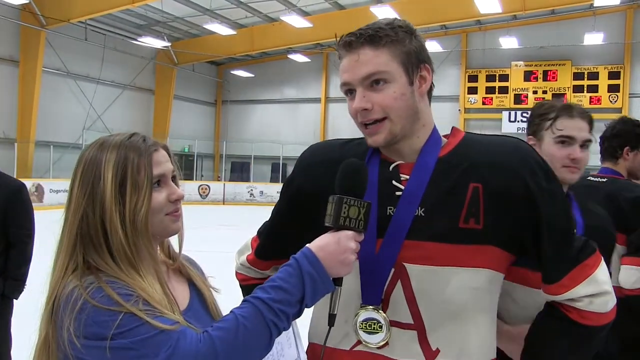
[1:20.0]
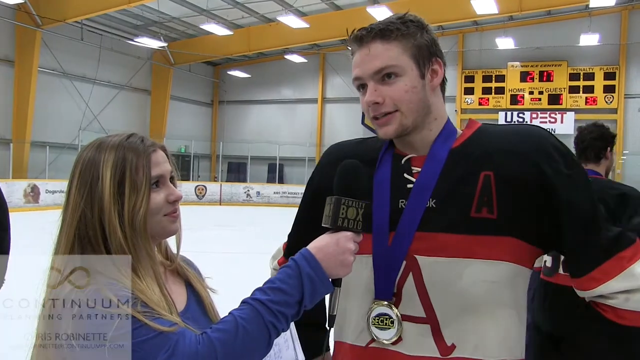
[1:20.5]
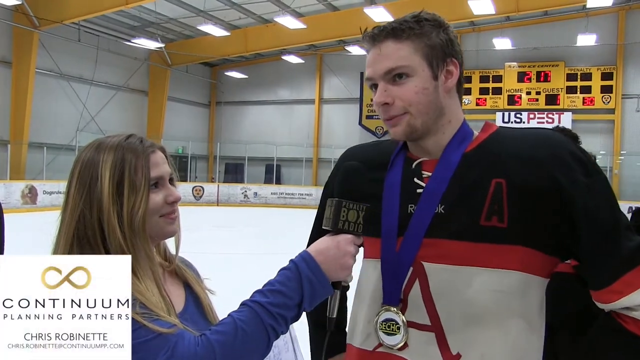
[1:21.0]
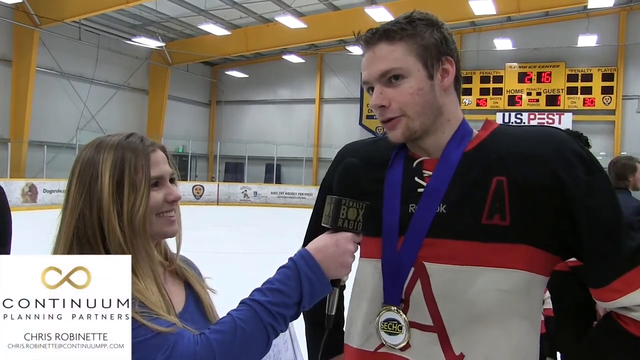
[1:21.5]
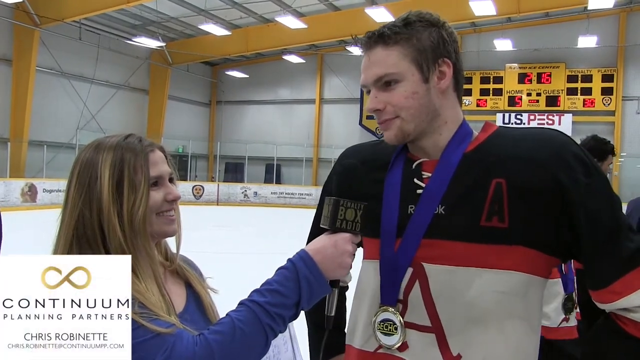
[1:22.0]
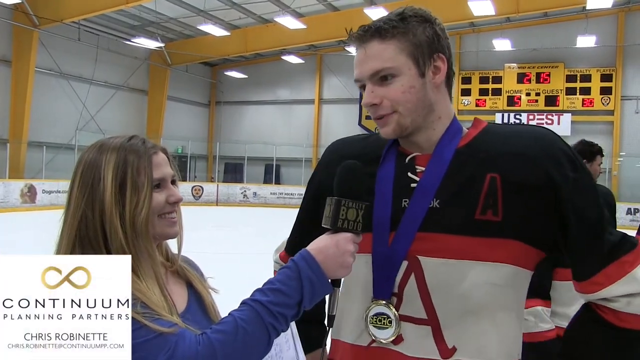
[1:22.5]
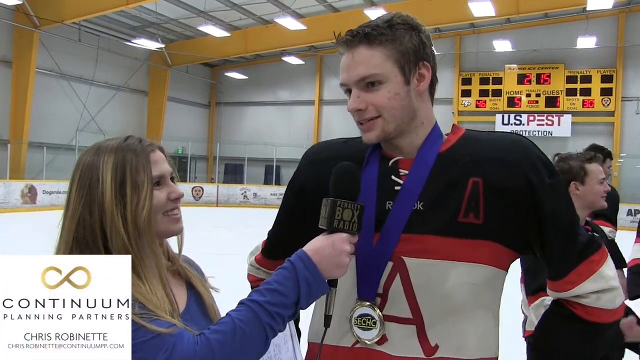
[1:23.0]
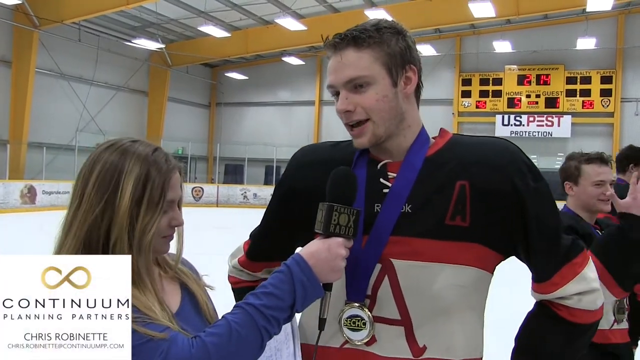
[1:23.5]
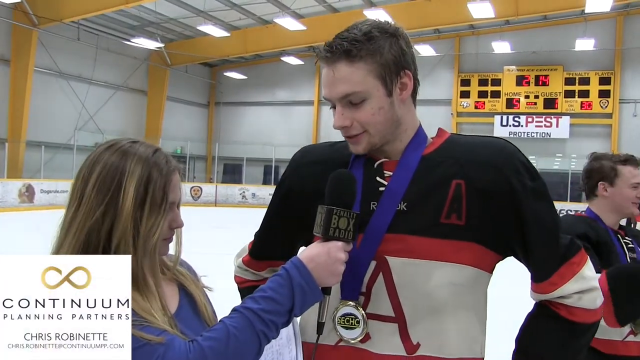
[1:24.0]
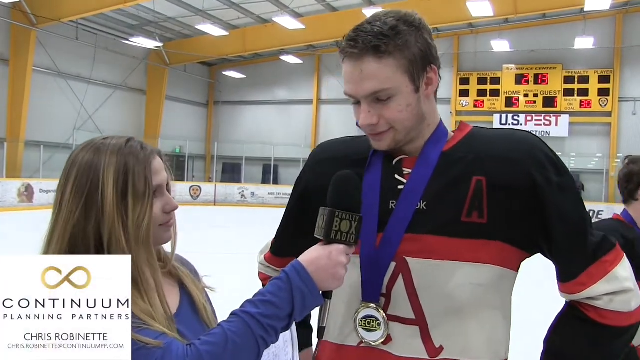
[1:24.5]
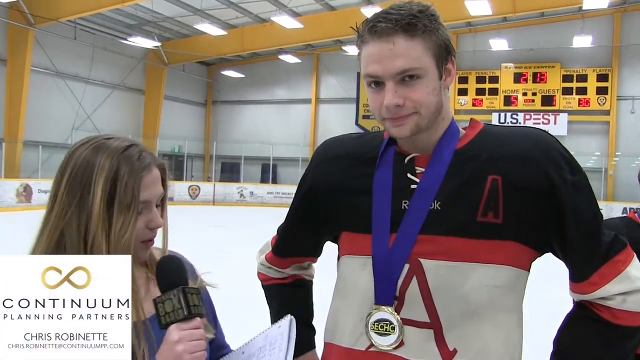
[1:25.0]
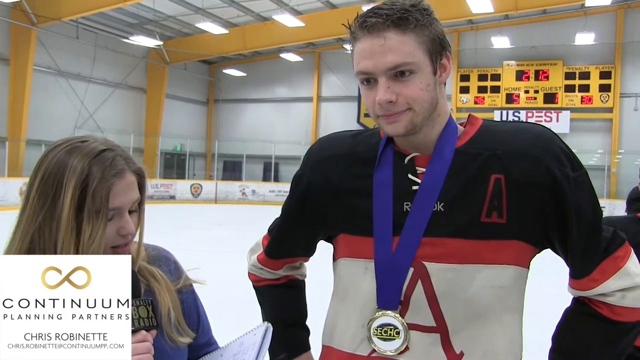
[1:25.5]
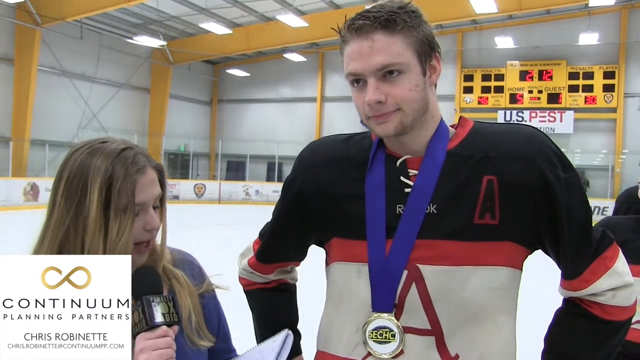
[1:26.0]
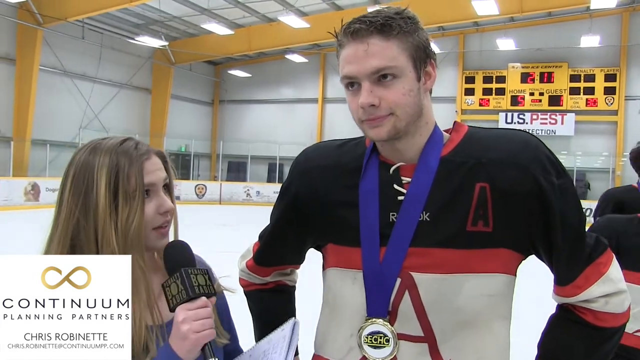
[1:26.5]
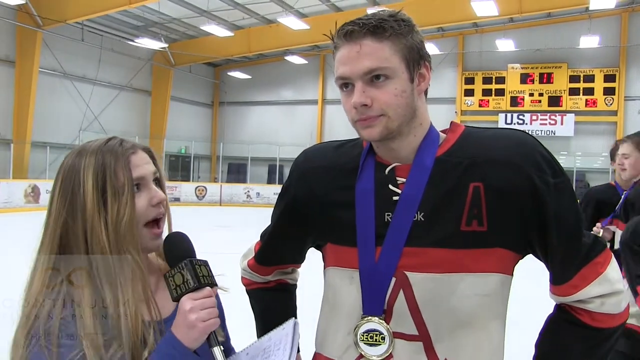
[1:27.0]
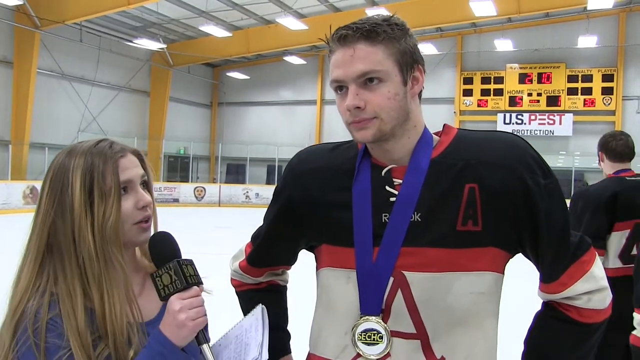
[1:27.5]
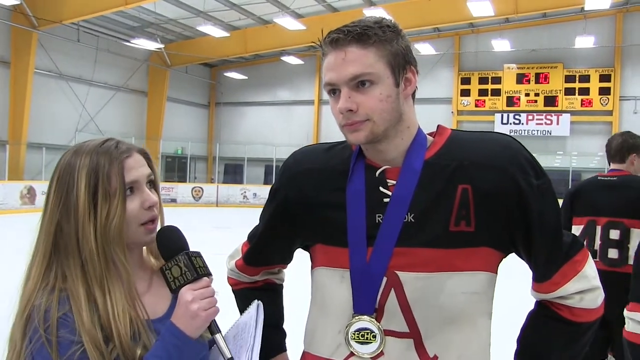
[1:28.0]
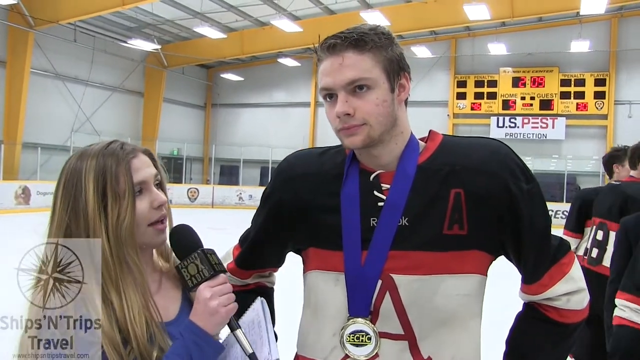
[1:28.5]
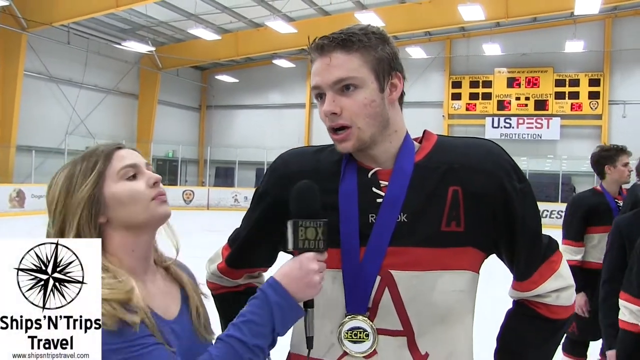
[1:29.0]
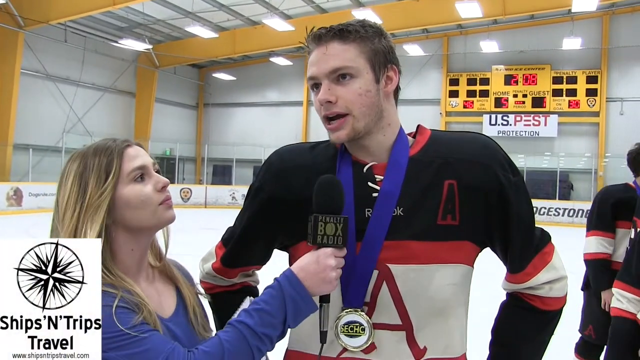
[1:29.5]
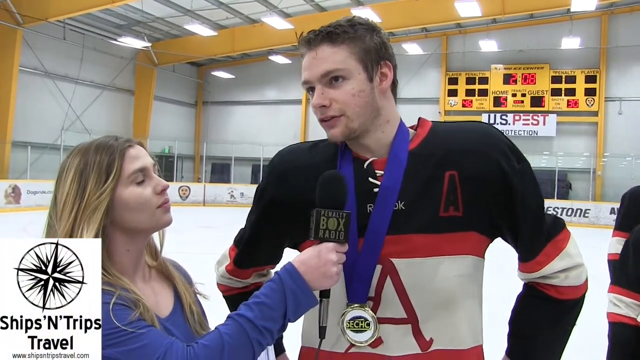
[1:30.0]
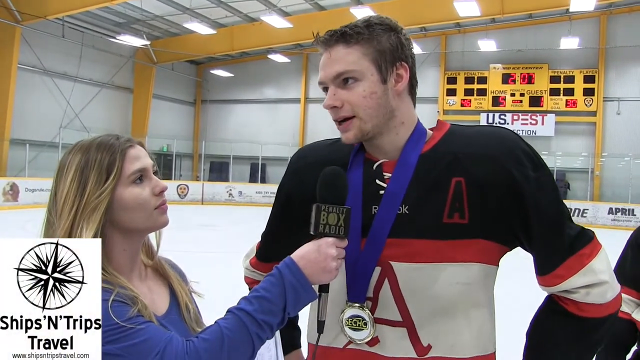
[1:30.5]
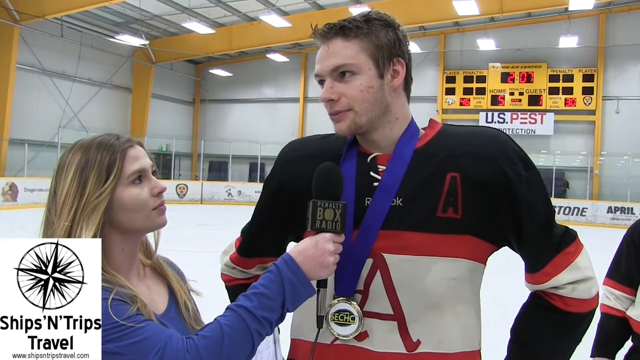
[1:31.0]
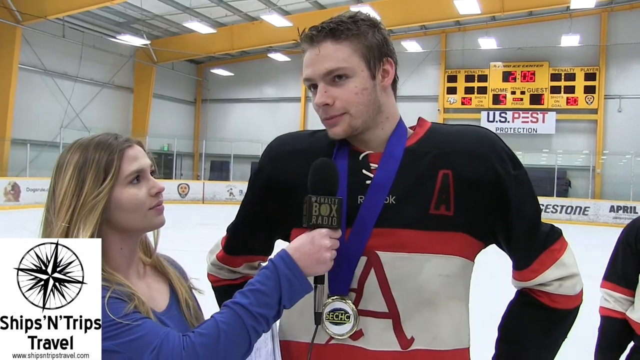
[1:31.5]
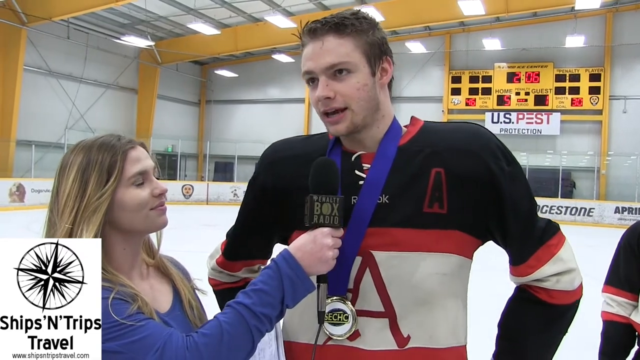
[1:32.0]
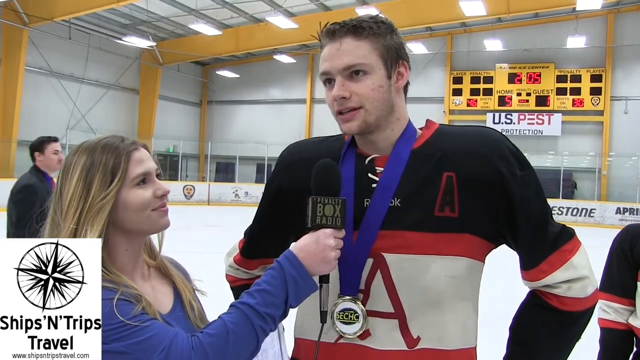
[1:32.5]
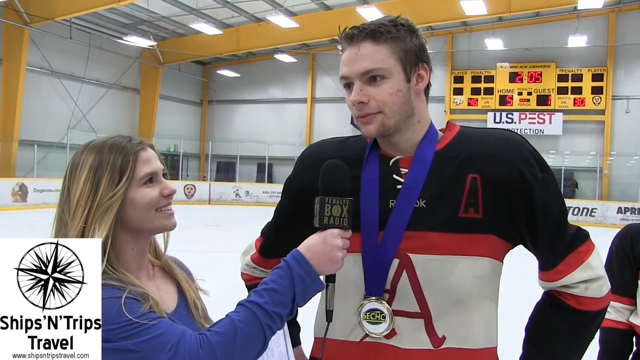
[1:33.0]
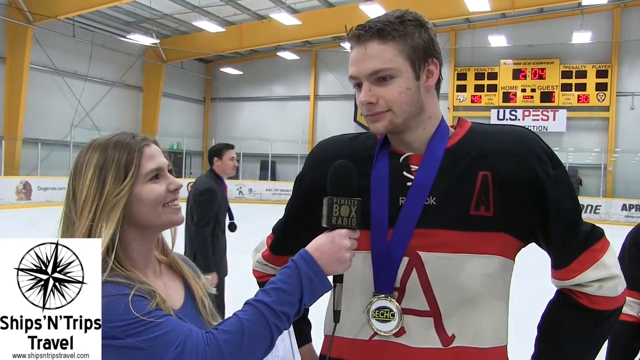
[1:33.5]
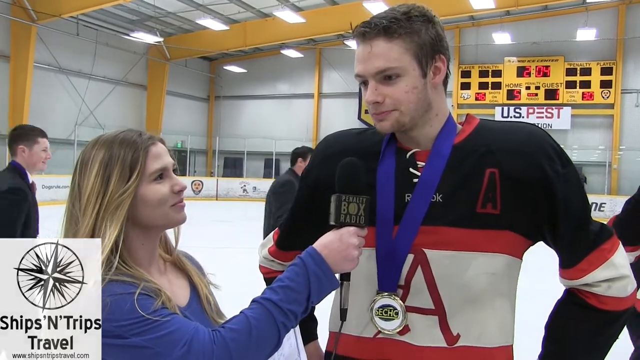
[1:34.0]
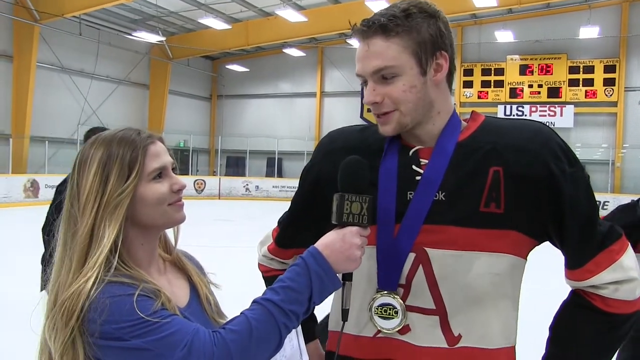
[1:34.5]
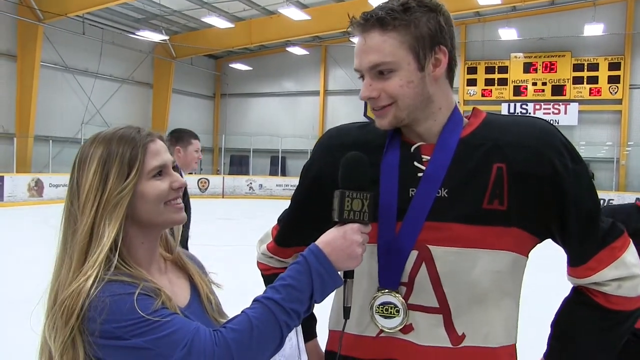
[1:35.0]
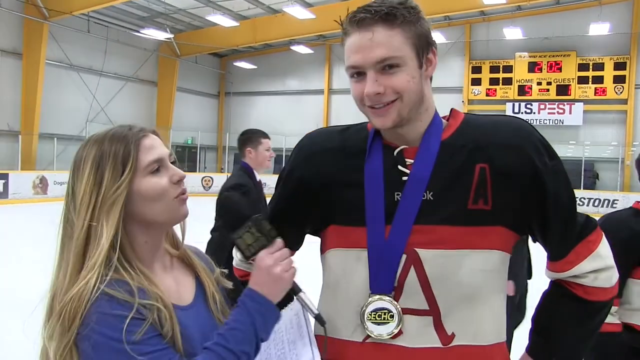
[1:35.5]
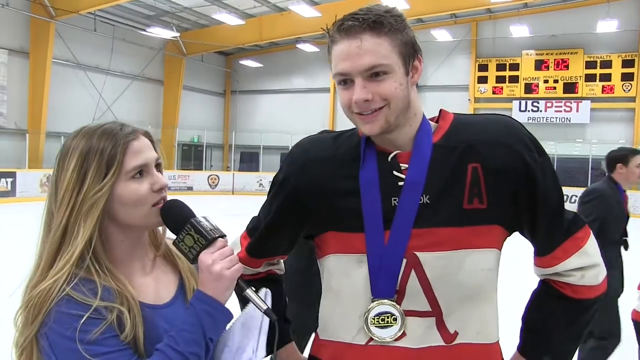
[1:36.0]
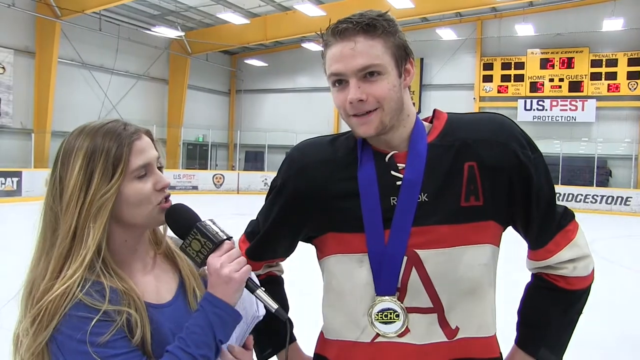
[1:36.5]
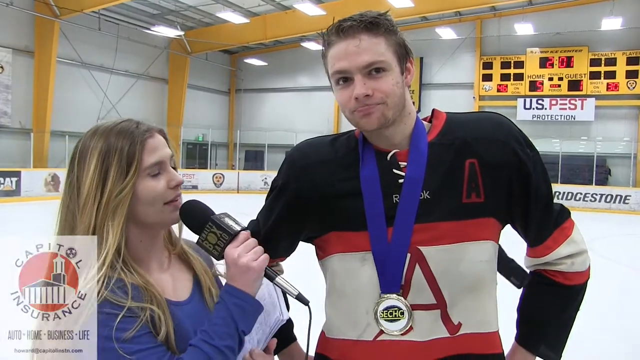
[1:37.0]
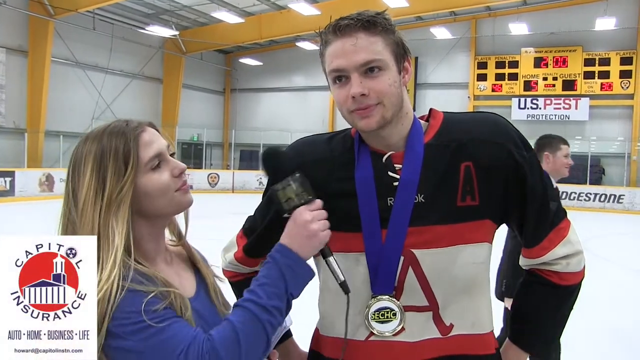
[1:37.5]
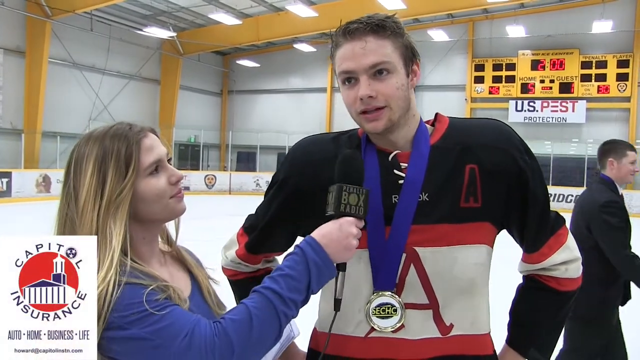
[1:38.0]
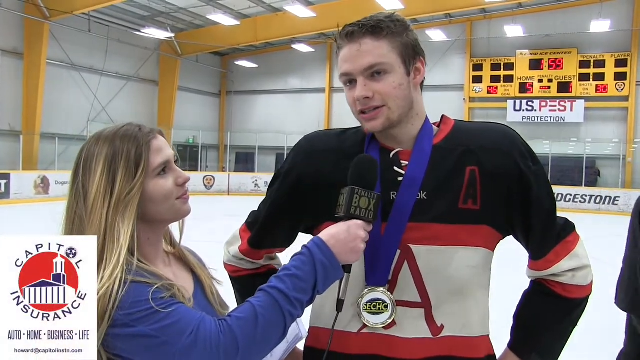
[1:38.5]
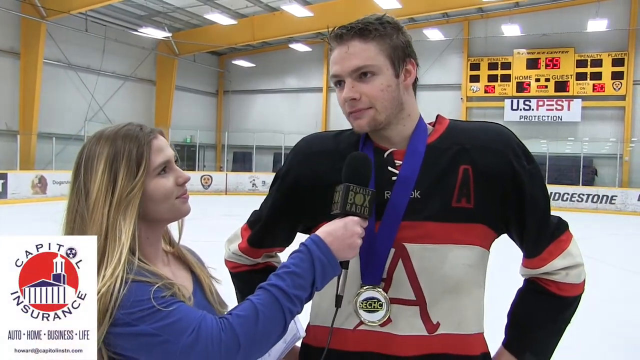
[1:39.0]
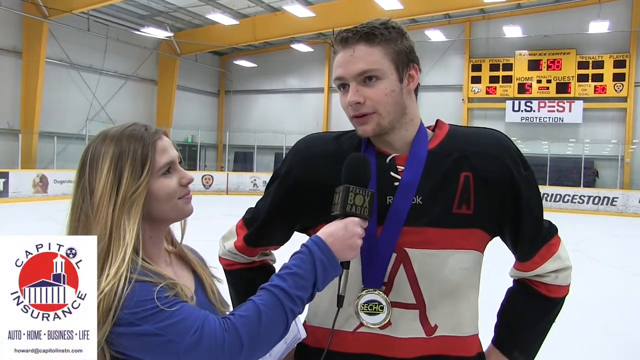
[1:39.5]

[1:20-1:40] A player has a red A on his hockey jersey. A woman with long blonde hair, in the bottom left-hand section of the screen, interviews him; she looks at him, finishes her sentence, and brings the microphone over to him for his response. The arena walls are gray with yellow stripes in various areas, and there is a yellow spot in the background.